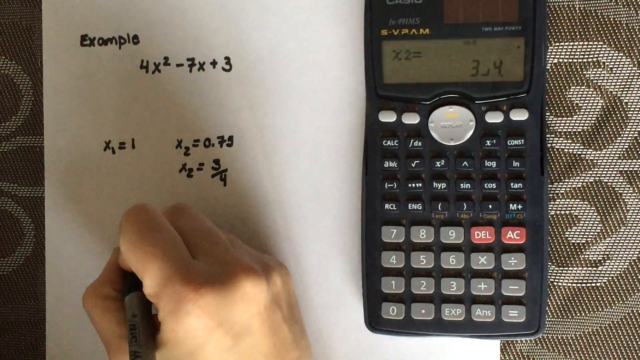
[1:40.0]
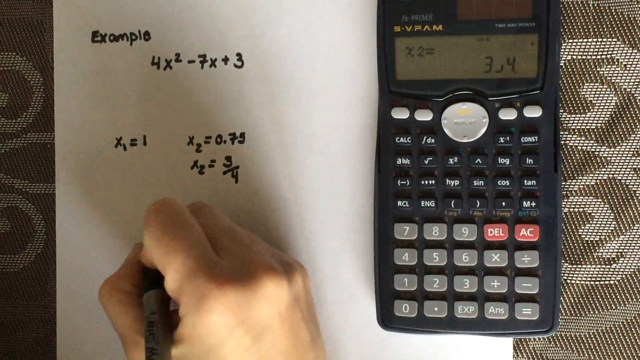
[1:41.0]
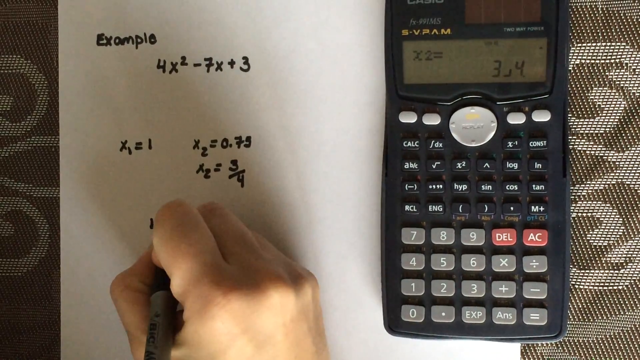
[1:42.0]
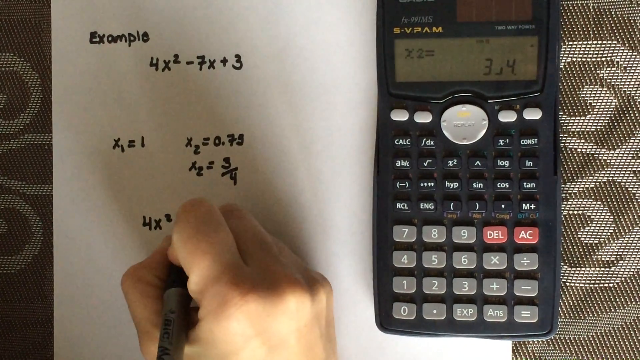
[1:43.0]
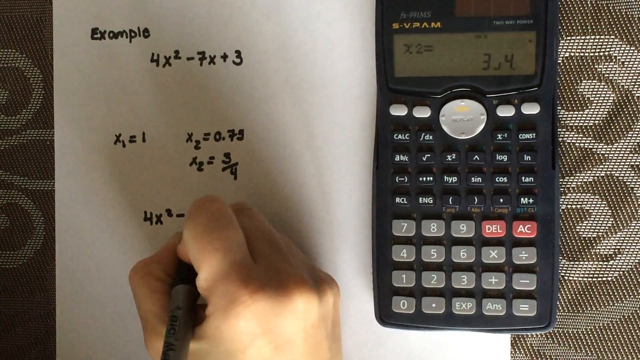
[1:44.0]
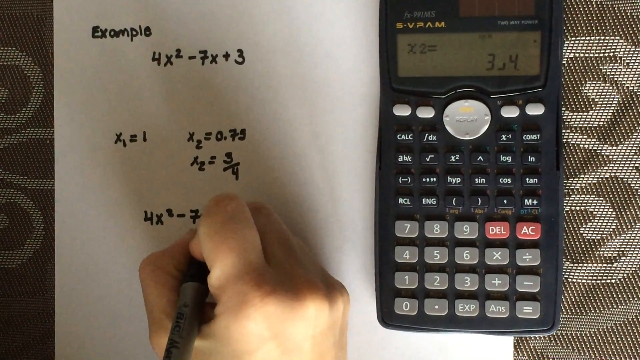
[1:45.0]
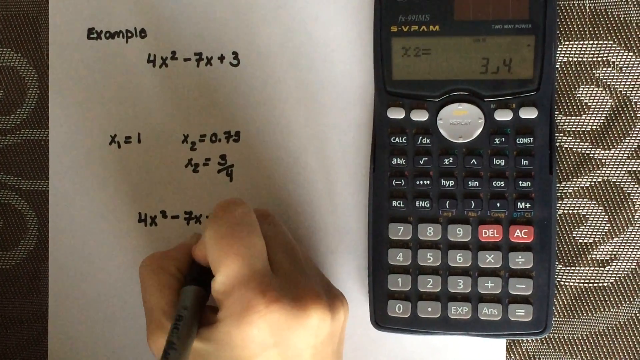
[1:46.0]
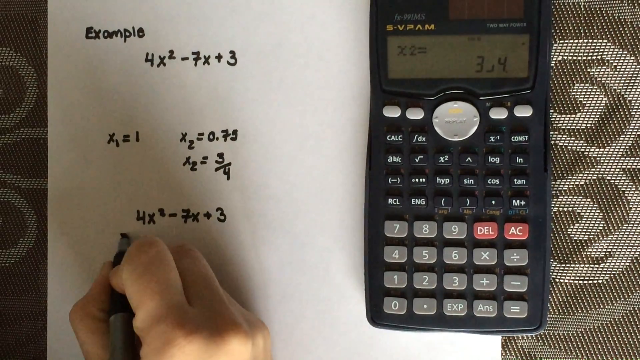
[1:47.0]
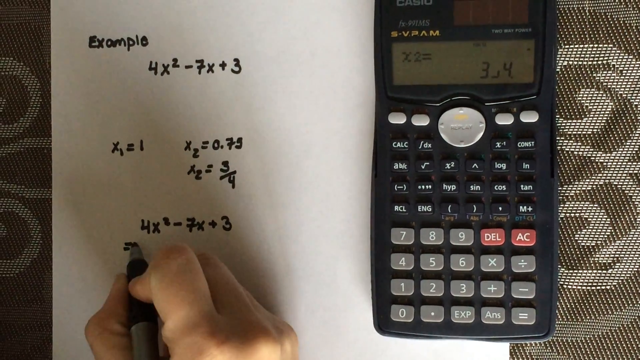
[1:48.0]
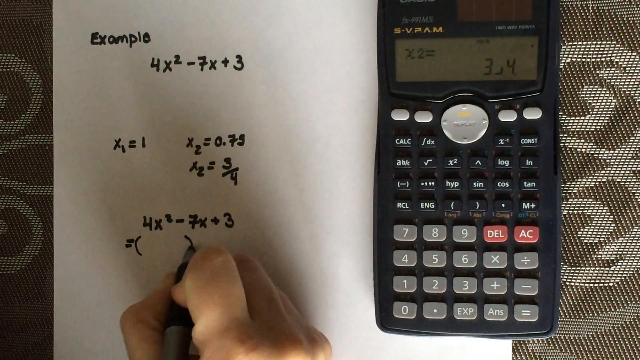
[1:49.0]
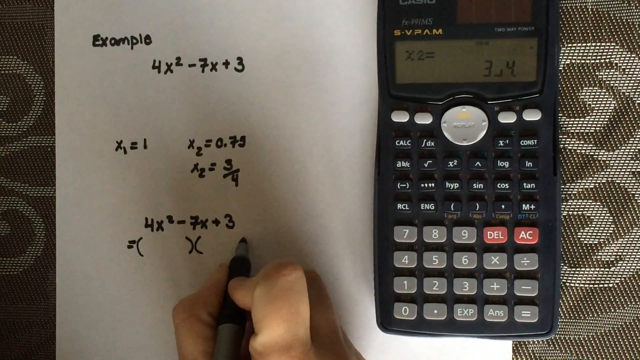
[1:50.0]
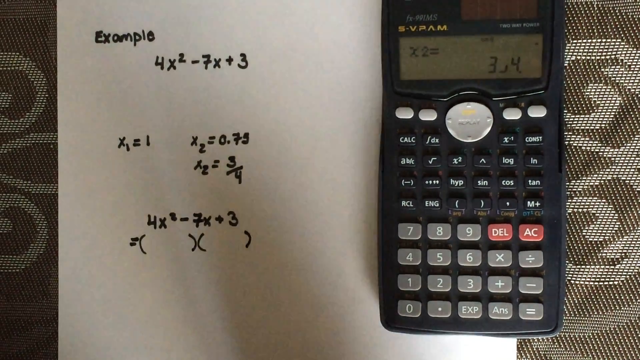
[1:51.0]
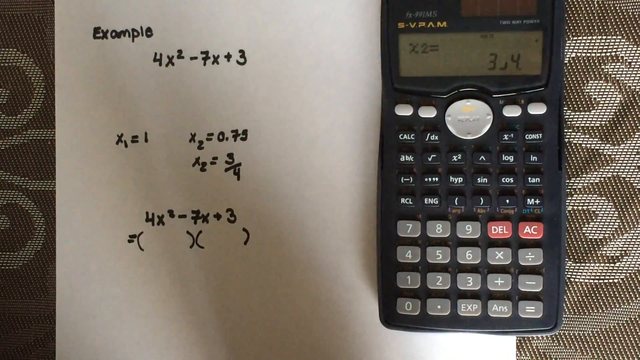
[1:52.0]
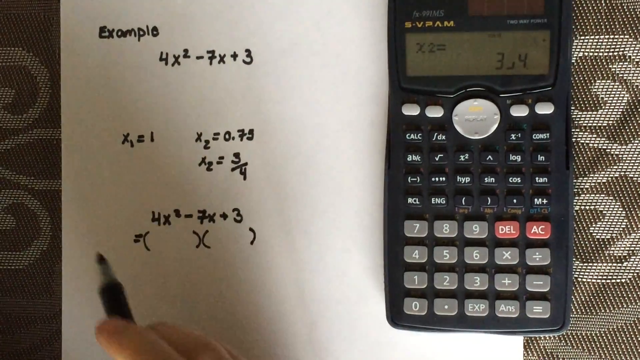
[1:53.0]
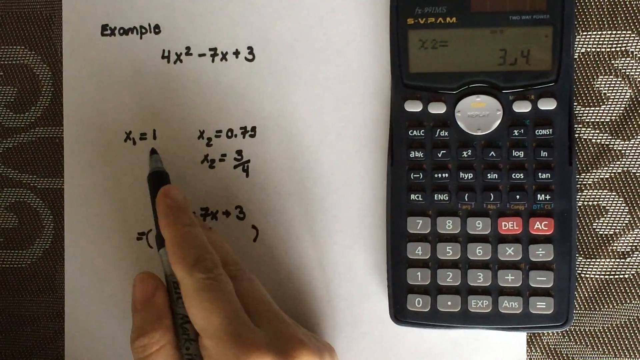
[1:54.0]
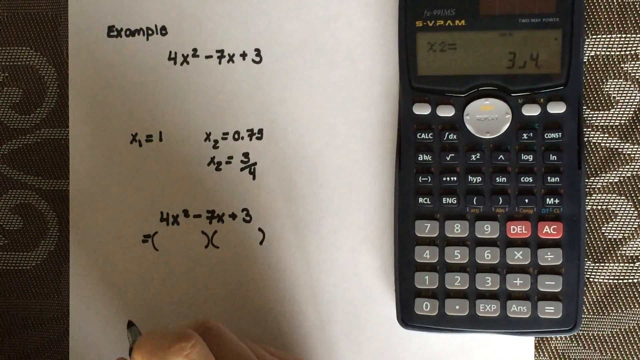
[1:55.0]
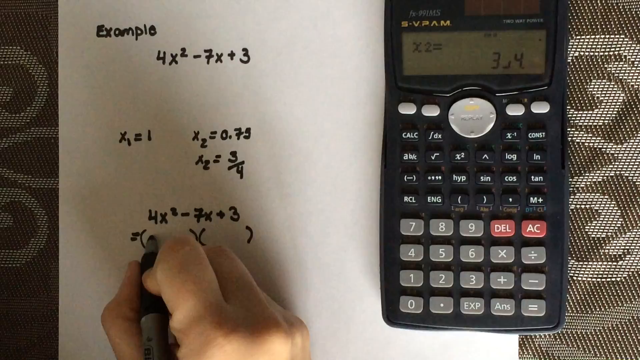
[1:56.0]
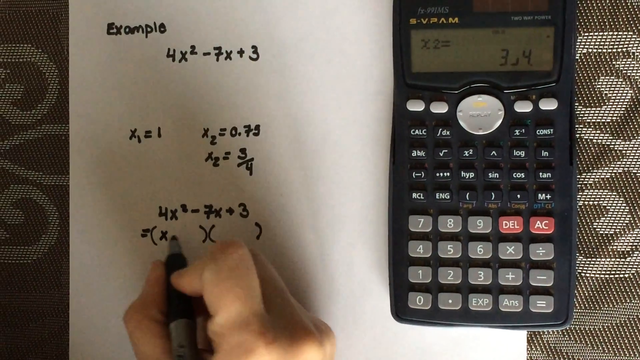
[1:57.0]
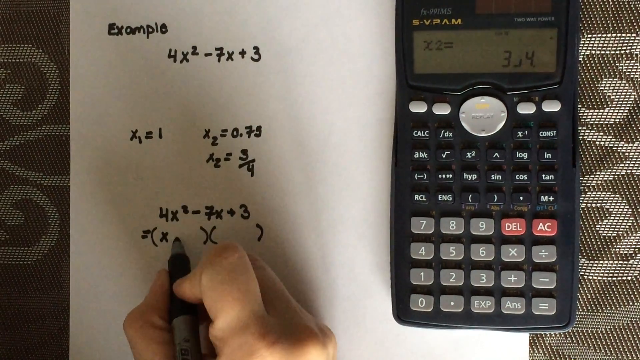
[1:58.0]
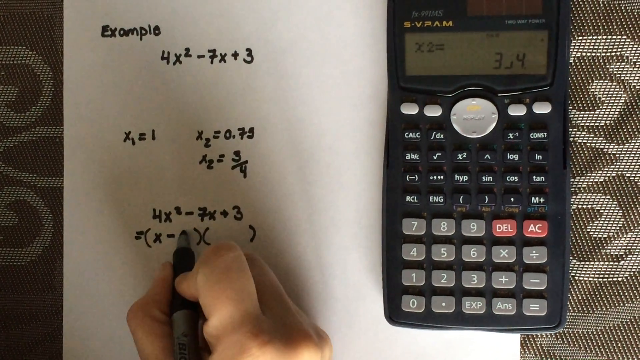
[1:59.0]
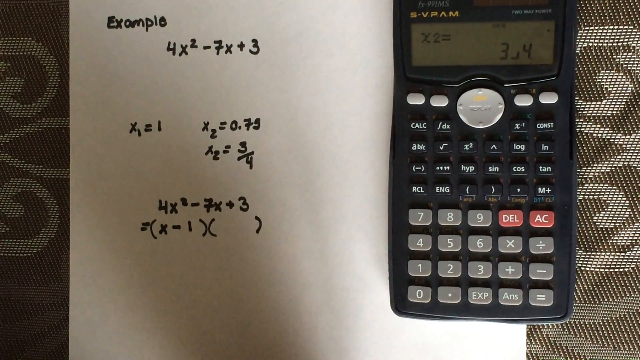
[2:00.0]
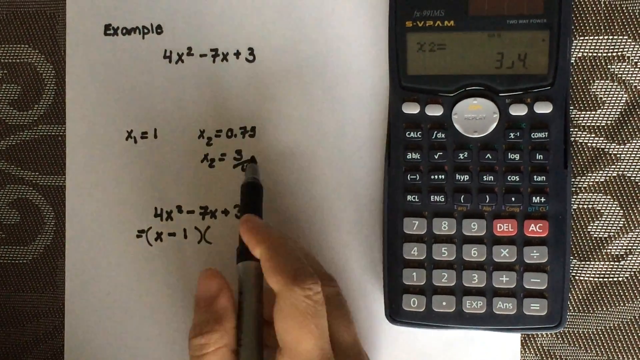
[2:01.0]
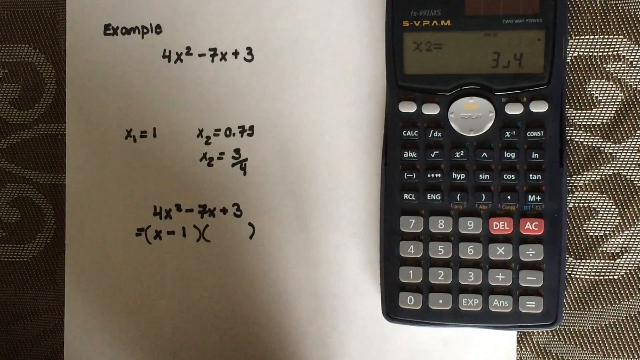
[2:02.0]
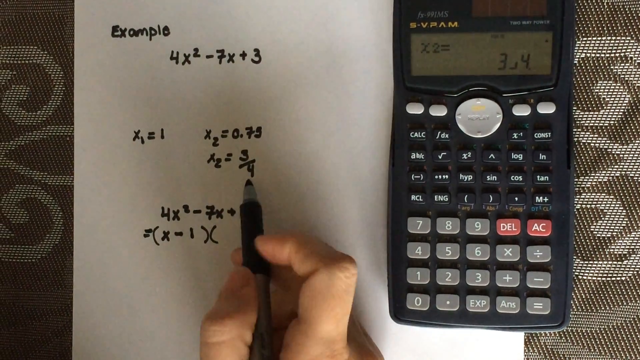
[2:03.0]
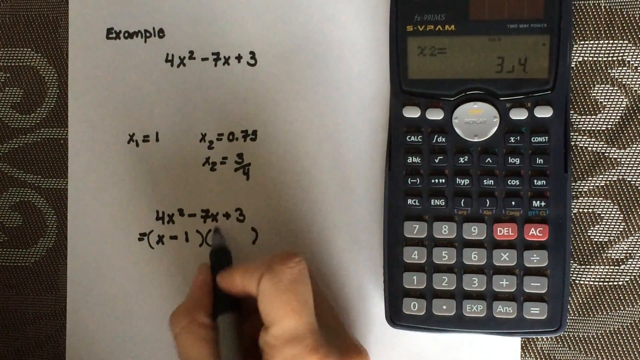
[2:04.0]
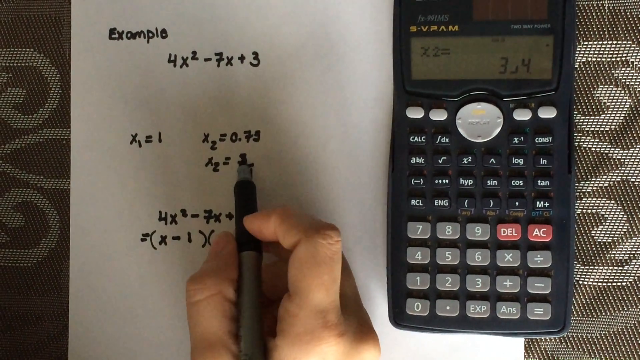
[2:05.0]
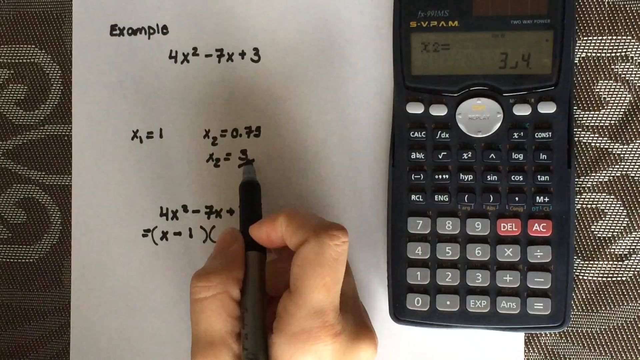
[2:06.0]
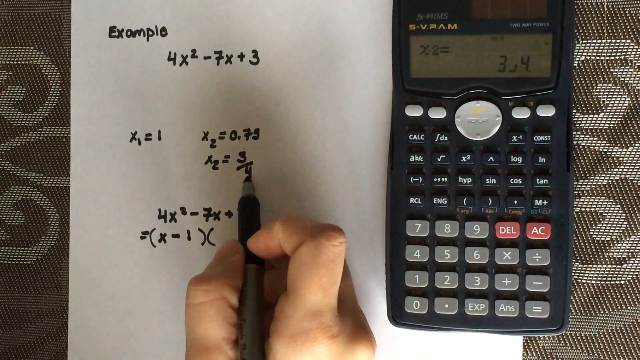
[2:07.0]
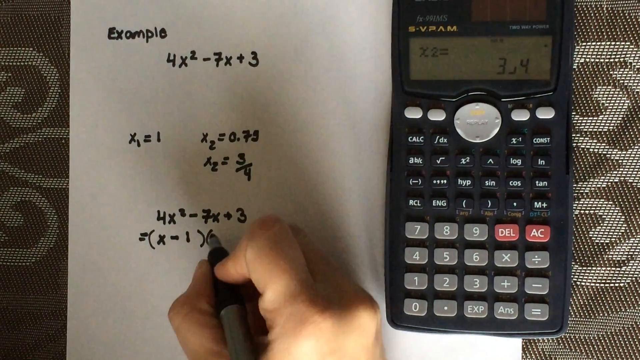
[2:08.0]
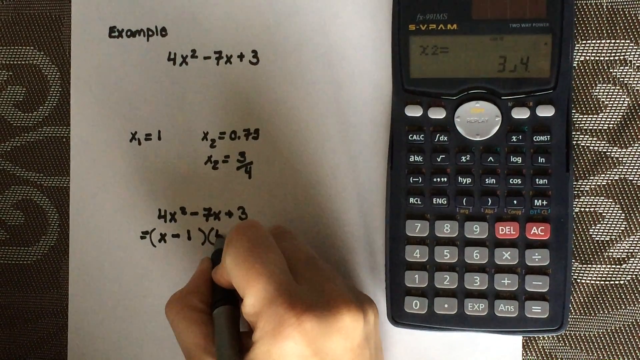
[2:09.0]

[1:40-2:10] The paper shows the example 4x squared minus 7x plus 3, along with x1 is 1 and x2 is 0.75. The person writes down the equation 4x squared minus 7x plus 3 and works backward to factor it into two sets of parentheses that, multiplied out, equal the equation. He writes with a Sharpie, and his hand is white. The calculator next to the paper shows various numbers on the green screen at its top. A sofa-like material with a symmetrical design on its left and right sides is in the background the entire time.